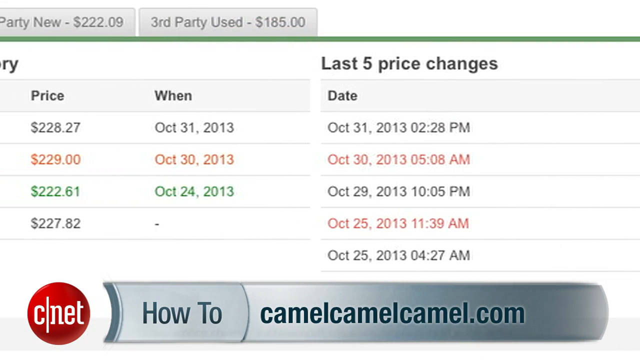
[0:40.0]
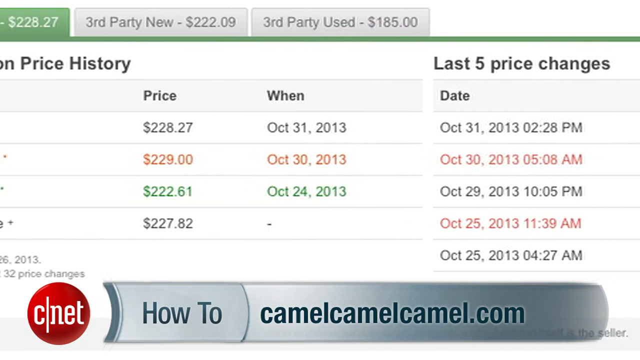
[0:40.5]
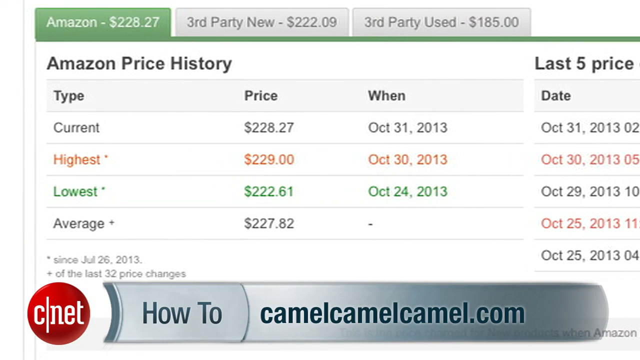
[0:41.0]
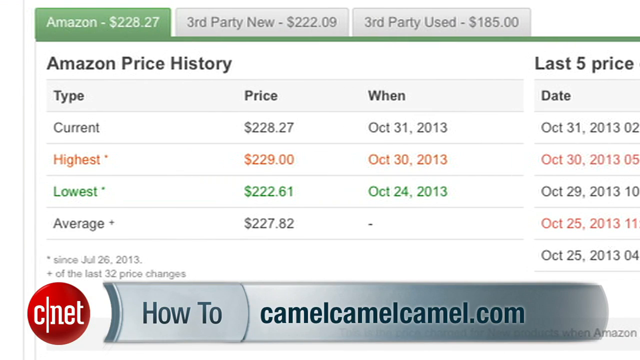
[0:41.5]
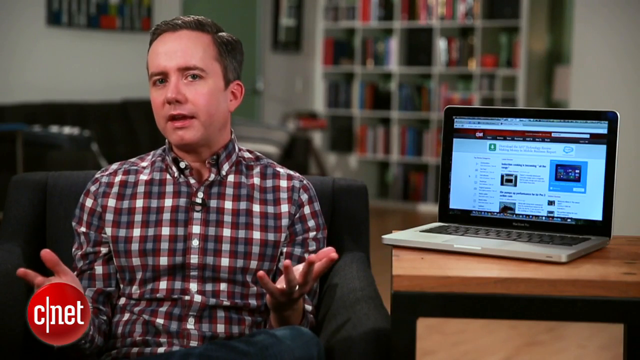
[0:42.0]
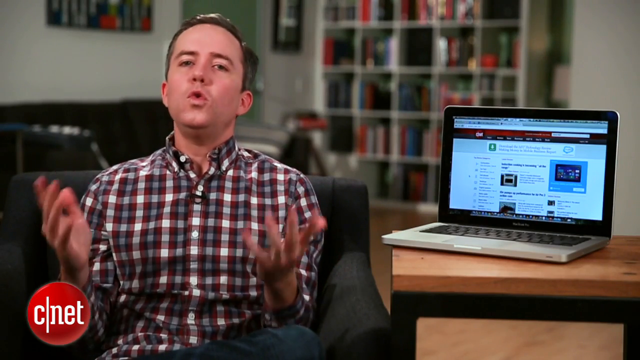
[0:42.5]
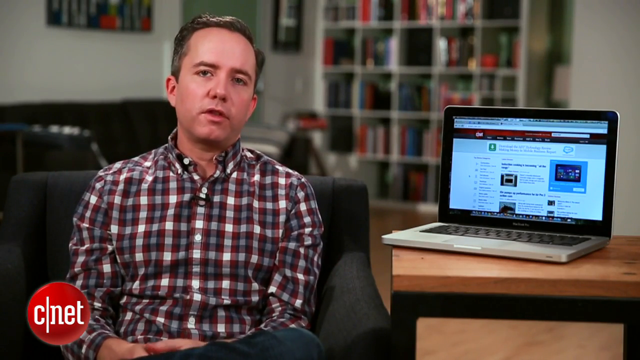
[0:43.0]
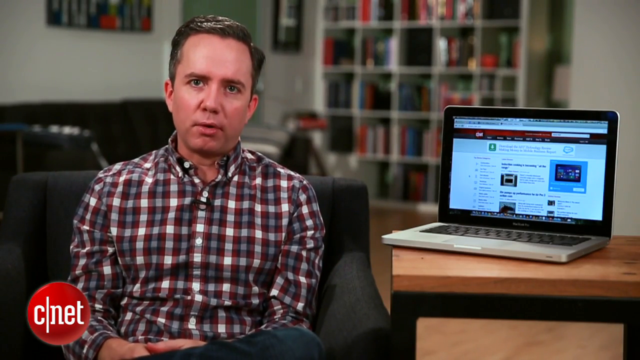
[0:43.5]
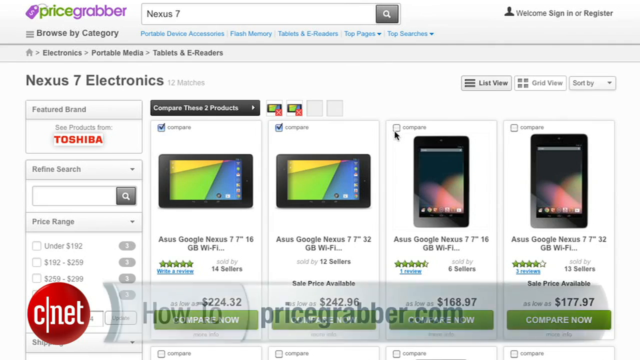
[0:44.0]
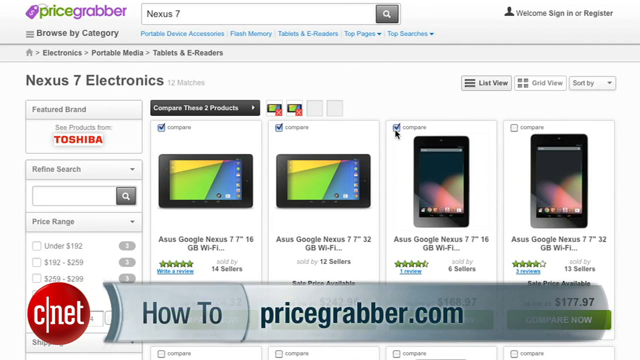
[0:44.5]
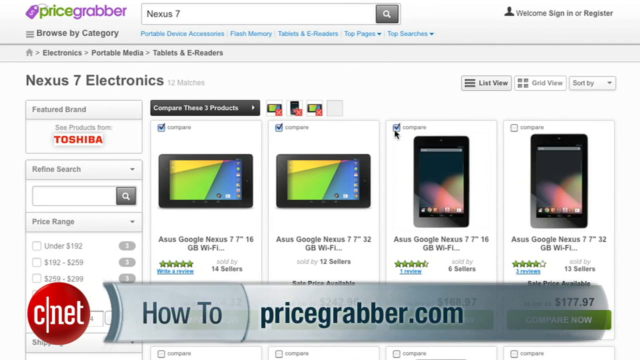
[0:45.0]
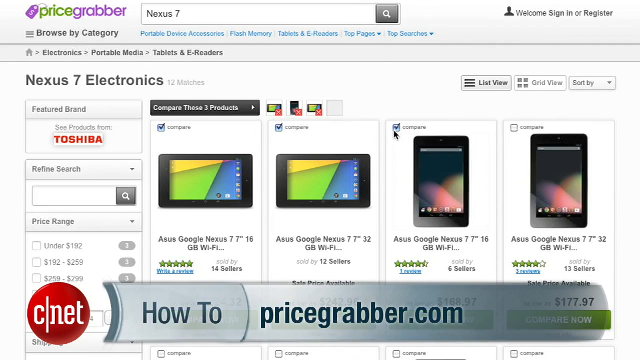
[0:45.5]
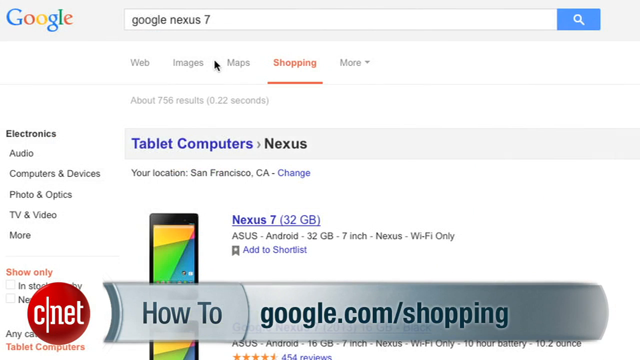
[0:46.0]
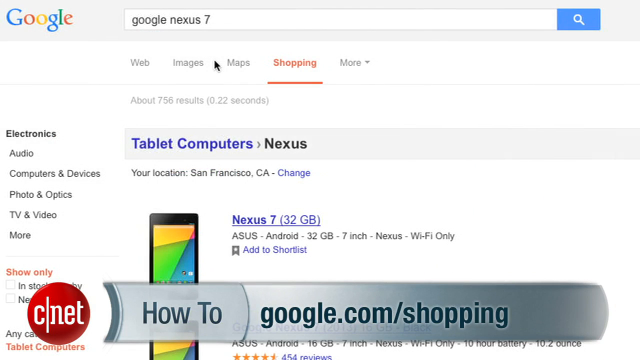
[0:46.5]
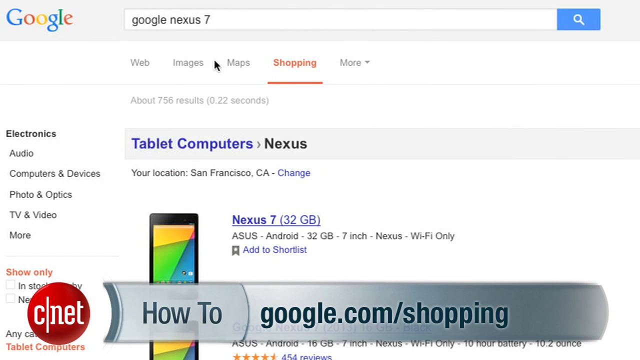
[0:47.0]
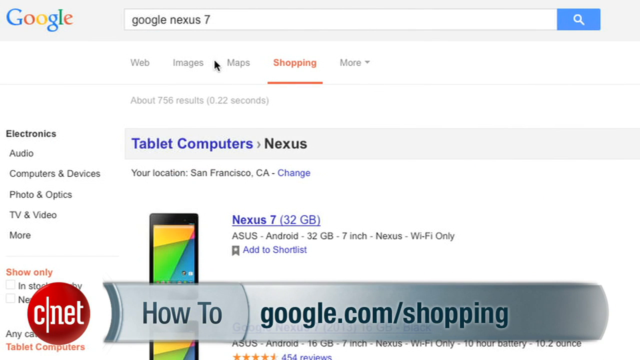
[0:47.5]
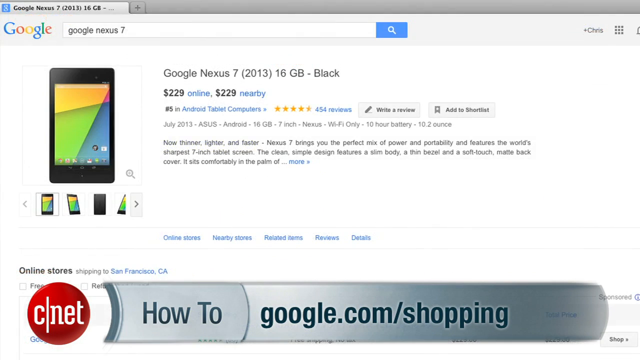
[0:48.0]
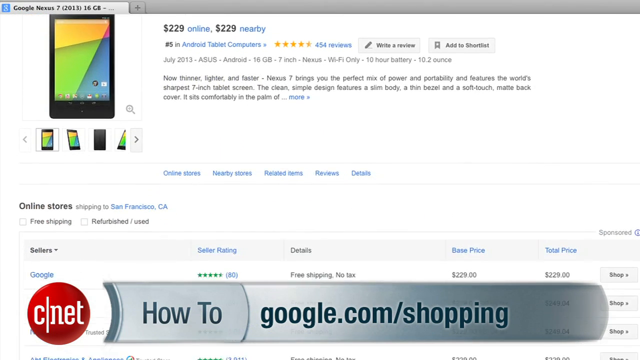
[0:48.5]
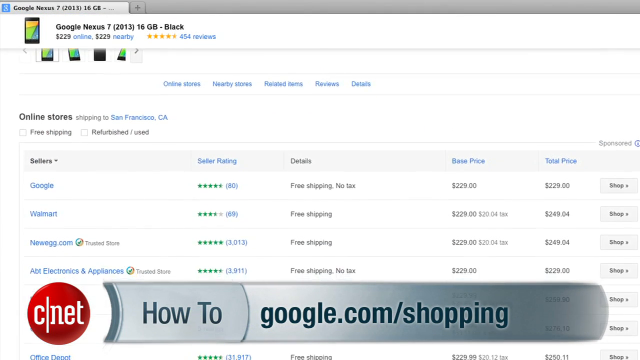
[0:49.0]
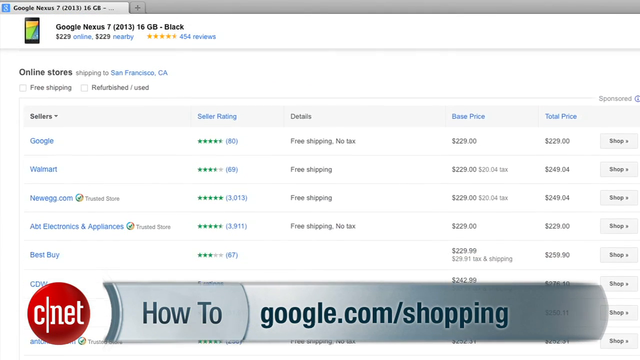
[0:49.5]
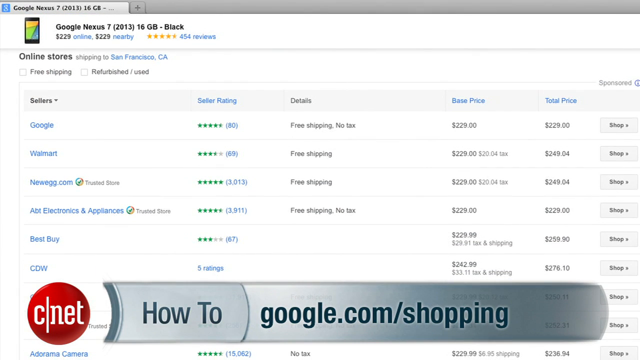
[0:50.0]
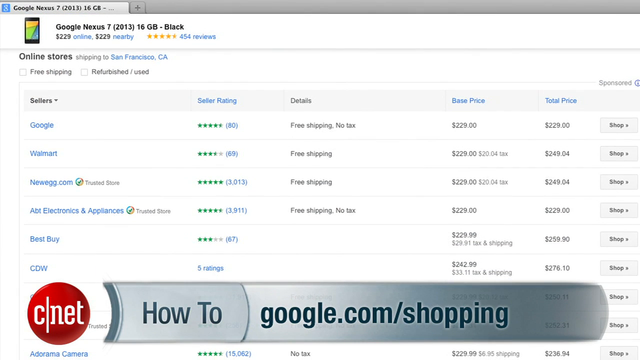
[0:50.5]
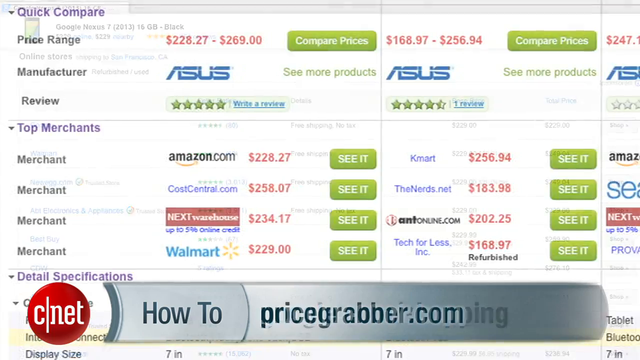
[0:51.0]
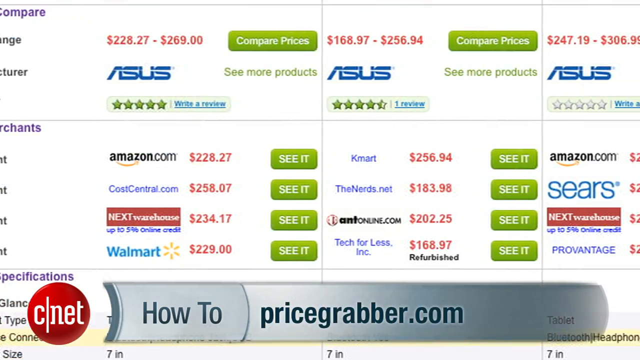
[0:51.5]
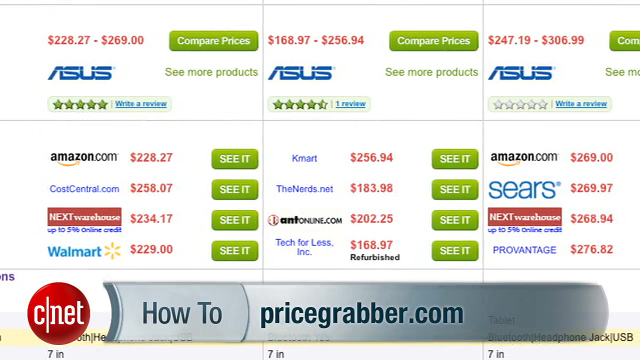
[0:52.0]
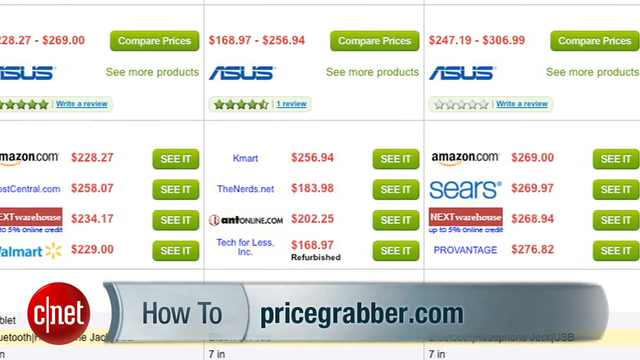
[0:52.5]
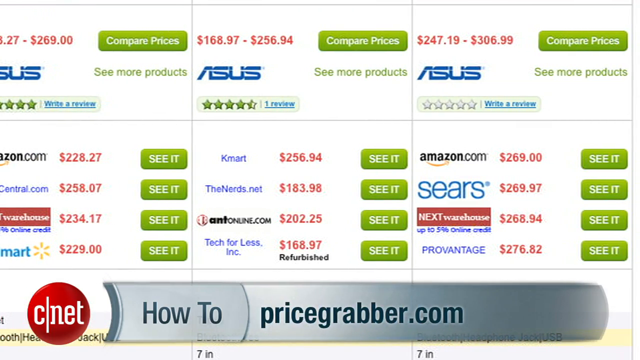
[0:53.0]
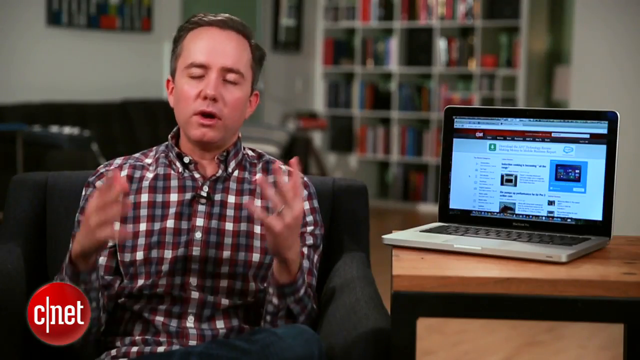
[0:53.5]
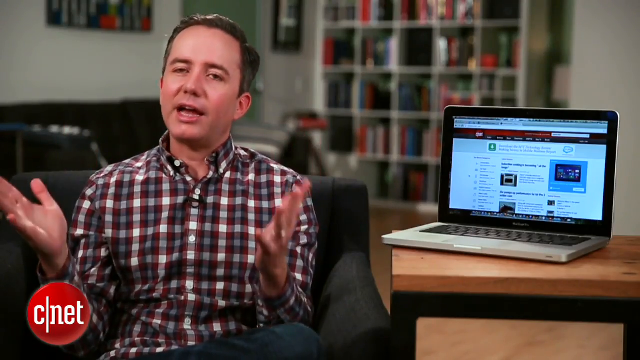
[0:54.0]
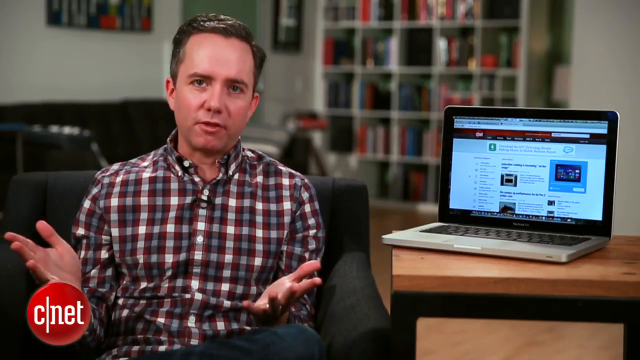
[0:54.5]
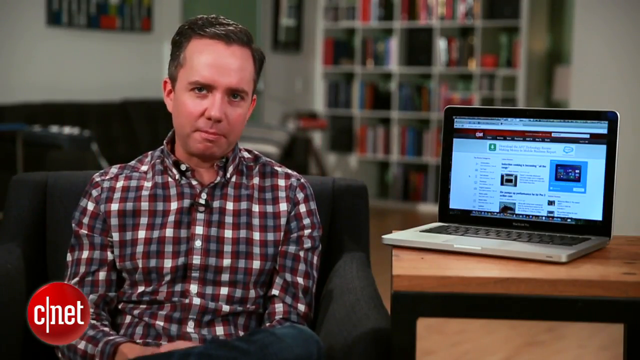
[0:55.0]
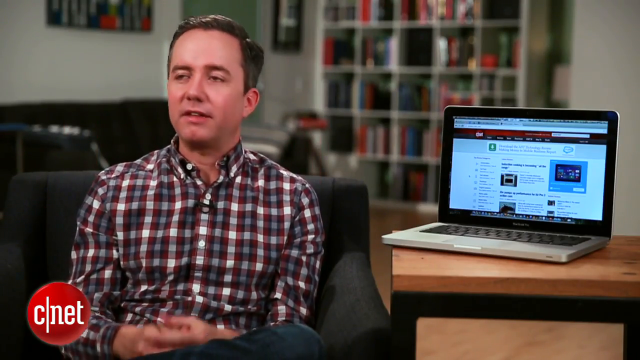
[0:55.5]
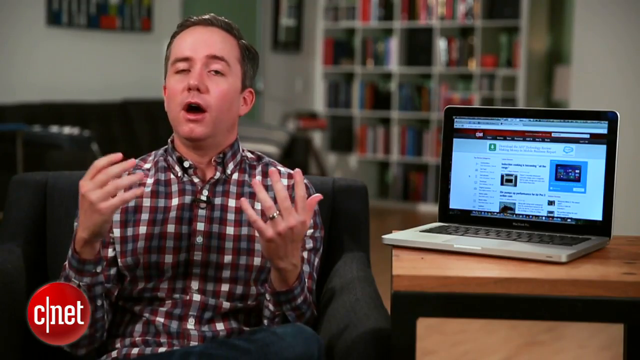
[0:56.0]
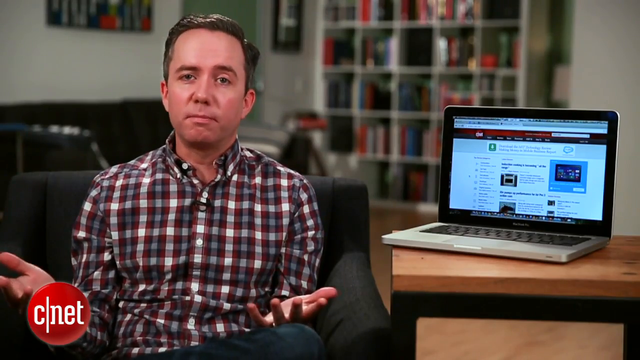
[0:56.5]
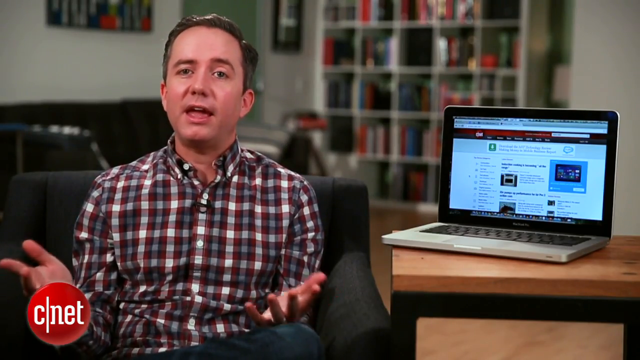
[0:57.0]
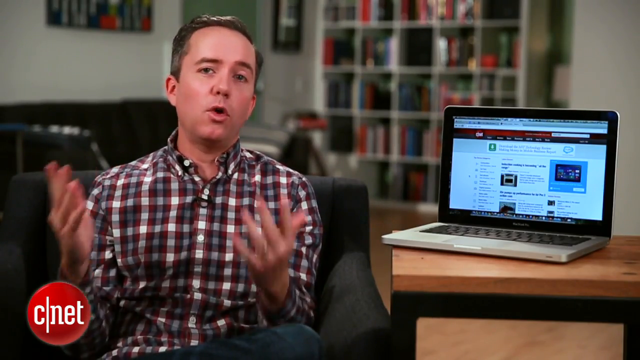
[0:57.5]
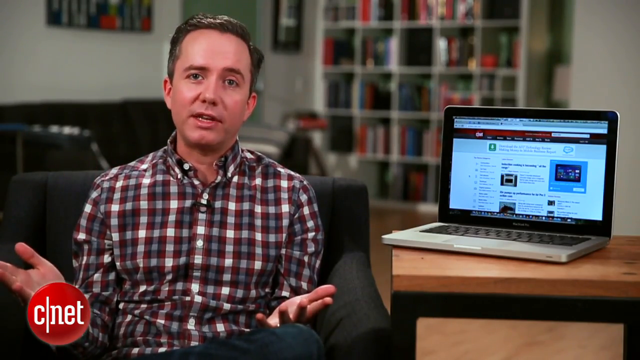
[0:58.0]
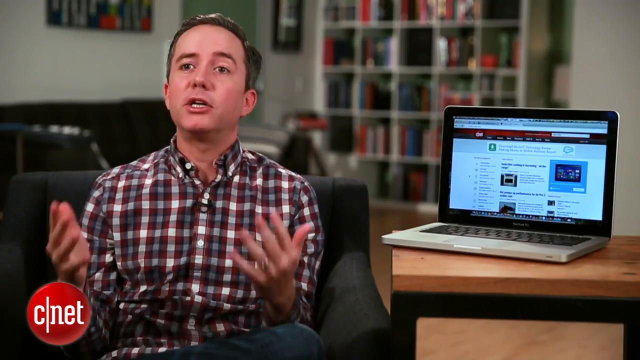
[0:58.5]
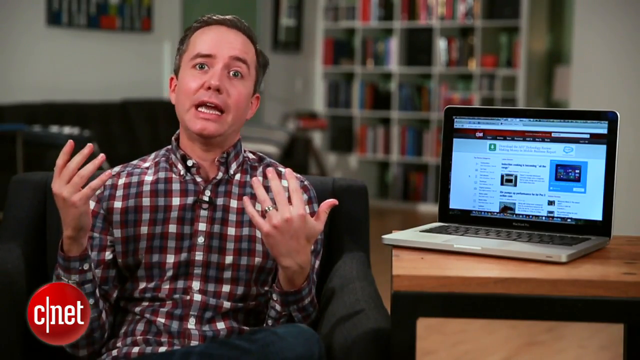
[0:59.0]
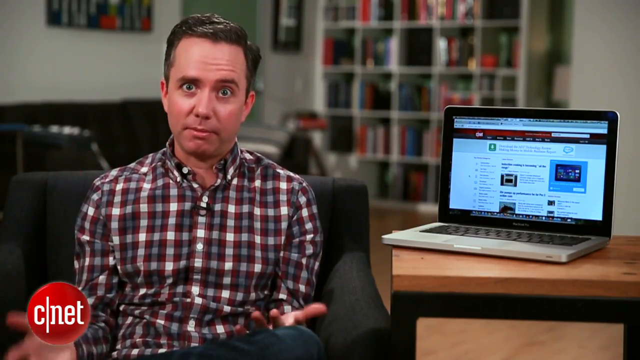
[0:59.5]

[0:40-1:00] There is more scrolling through price history on Amazon. The video cuts back to the editor, then to a screen grab of more tablet computers, comparing Google, Walmart, Amazon, and other websites. The editor makes multiple hand gestures. The prices seem to hover around the low 200s. The website is Price Grabber, and the item being researched is the Google Nexus 7. Various outlets are listed, including Cost Central, the Nerds, and Kmart, with lowest, highest, and average prices and star ratings. The video then zooms back to the editor.